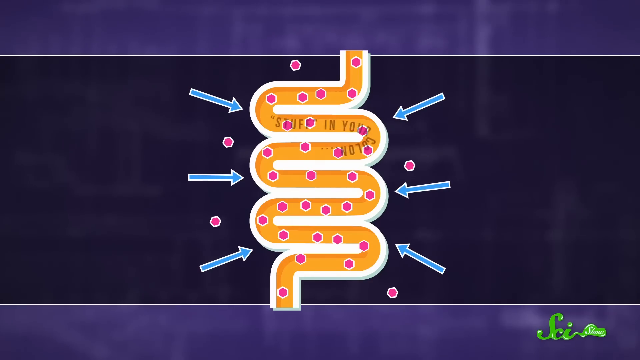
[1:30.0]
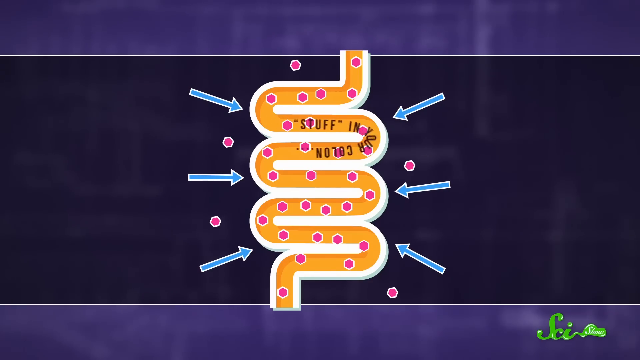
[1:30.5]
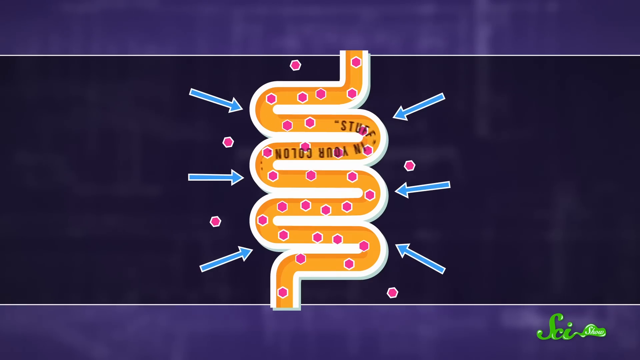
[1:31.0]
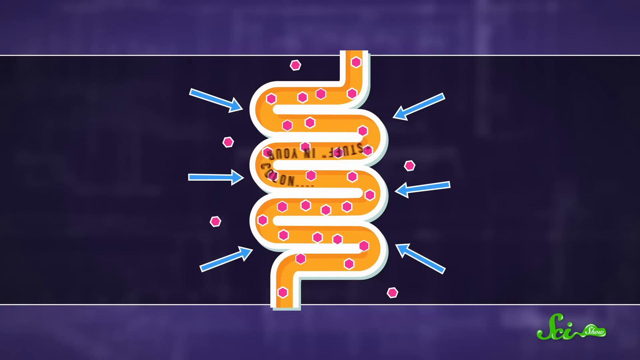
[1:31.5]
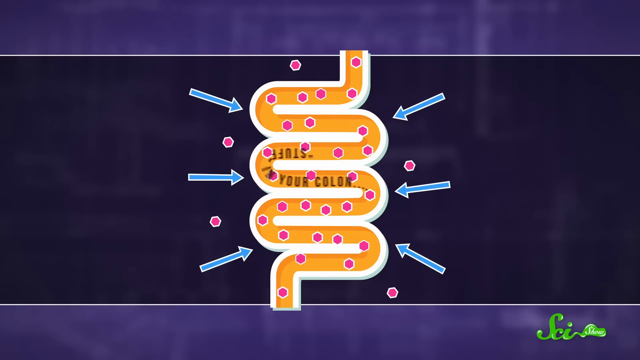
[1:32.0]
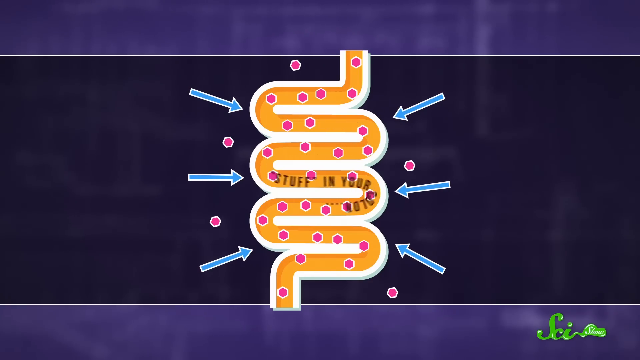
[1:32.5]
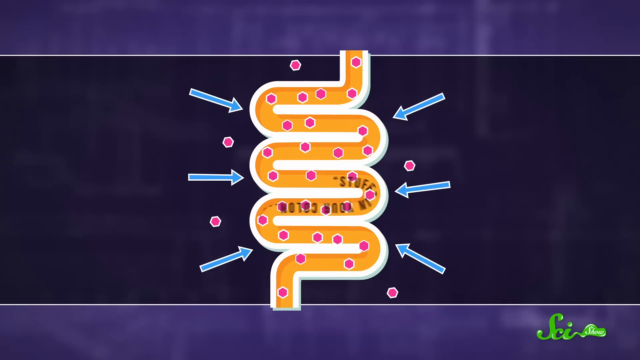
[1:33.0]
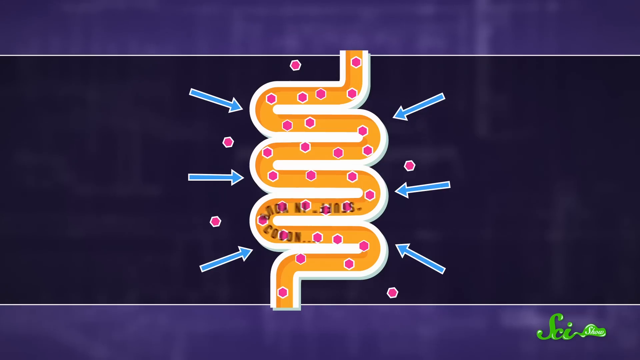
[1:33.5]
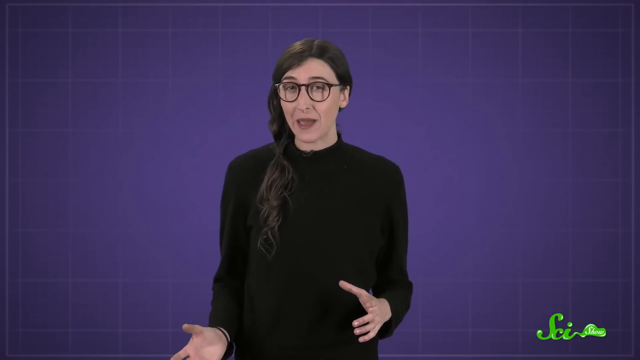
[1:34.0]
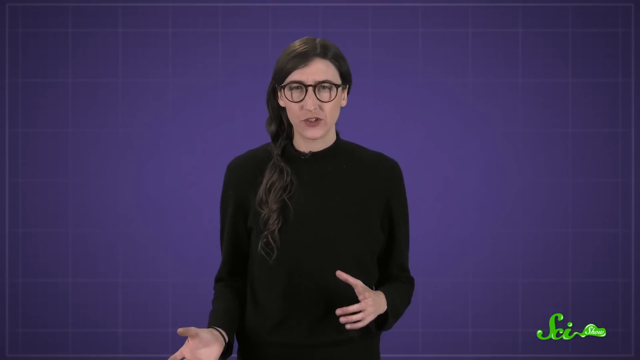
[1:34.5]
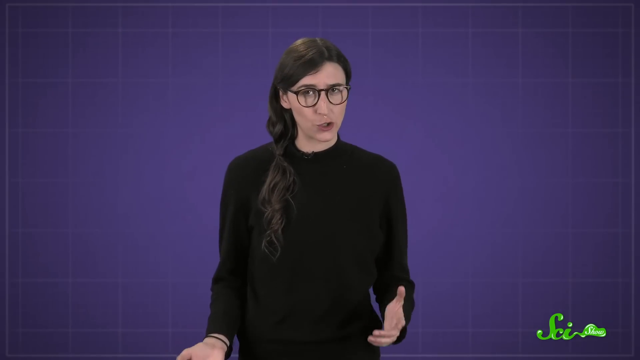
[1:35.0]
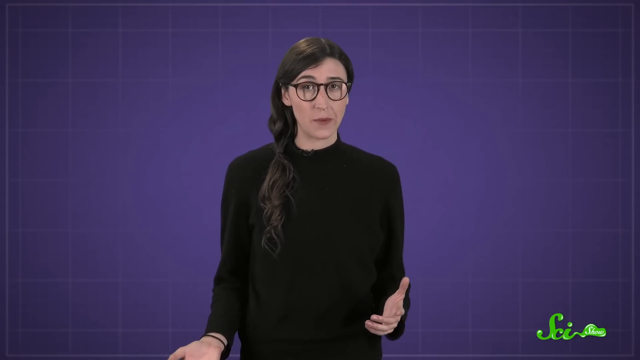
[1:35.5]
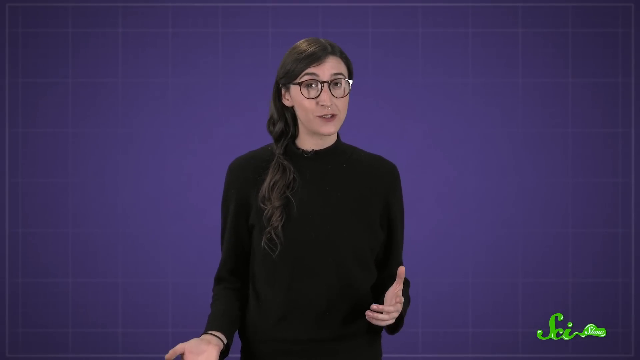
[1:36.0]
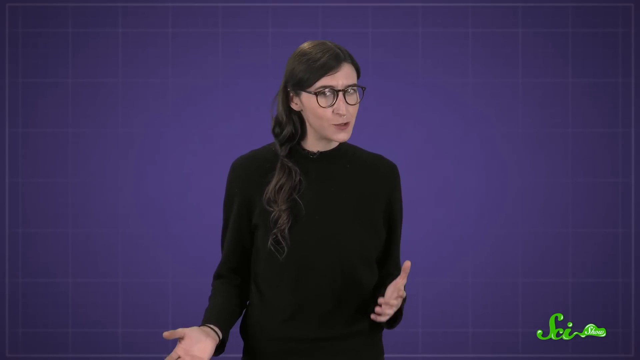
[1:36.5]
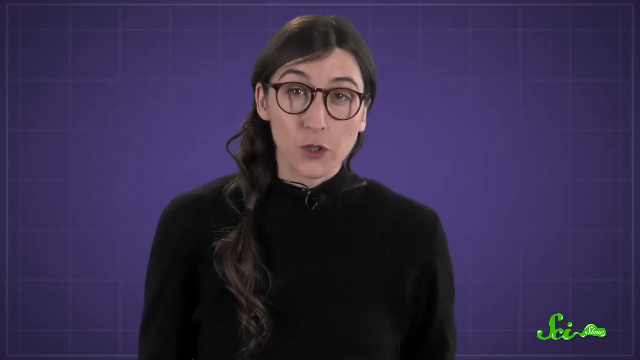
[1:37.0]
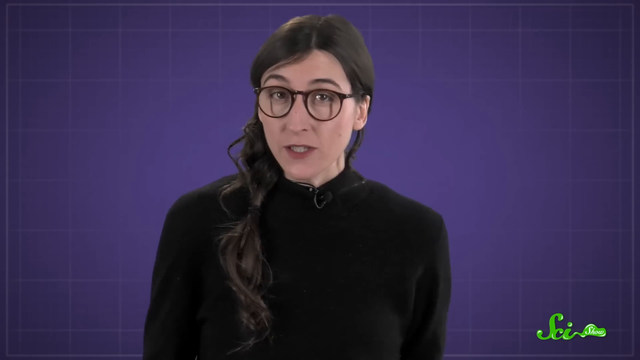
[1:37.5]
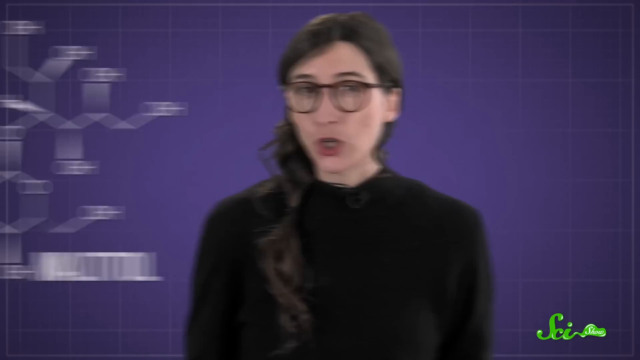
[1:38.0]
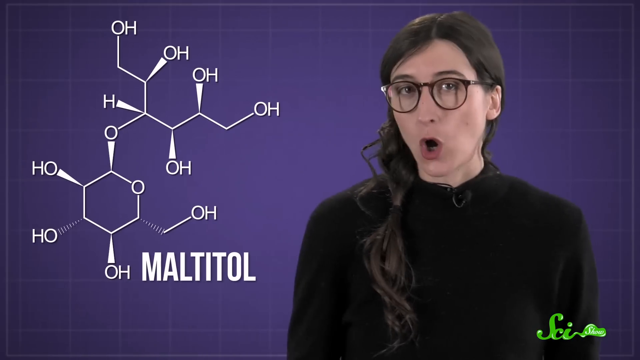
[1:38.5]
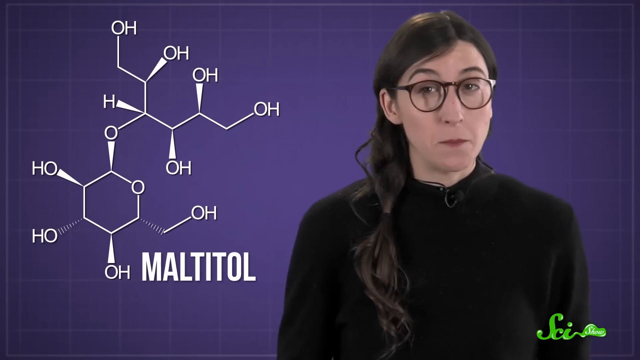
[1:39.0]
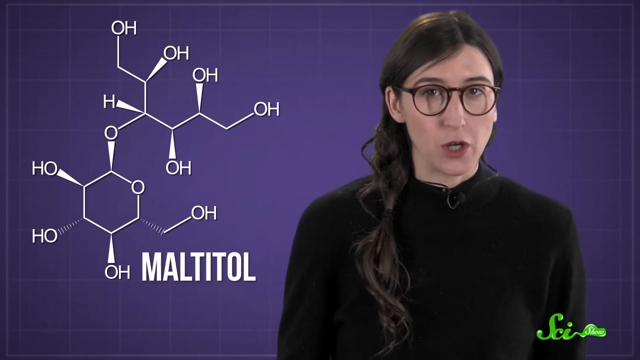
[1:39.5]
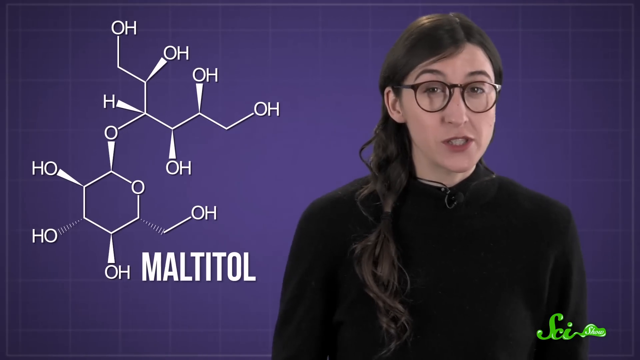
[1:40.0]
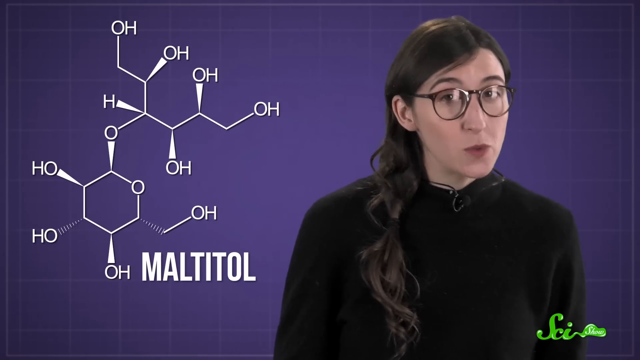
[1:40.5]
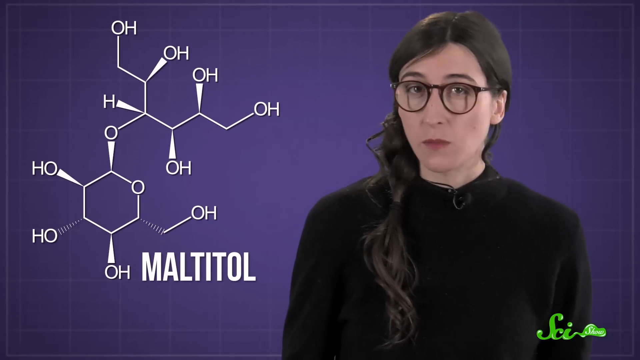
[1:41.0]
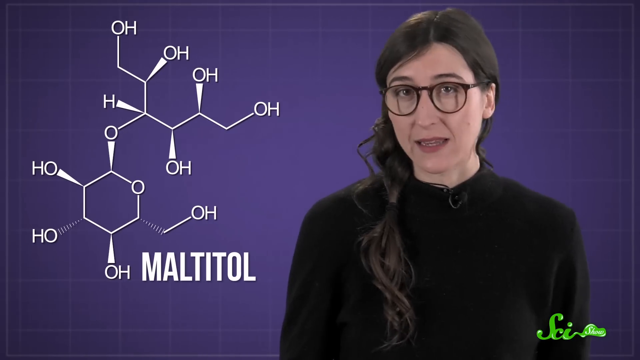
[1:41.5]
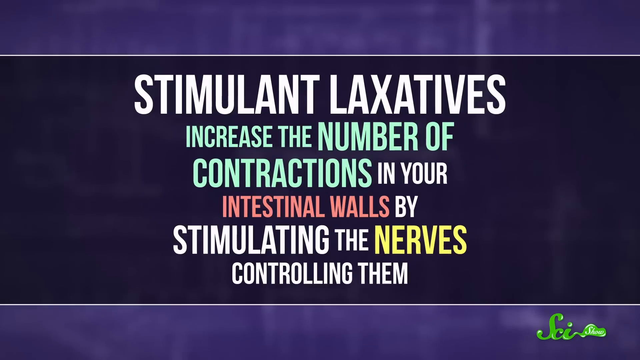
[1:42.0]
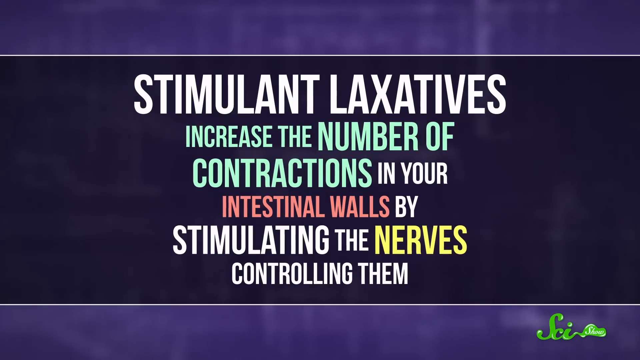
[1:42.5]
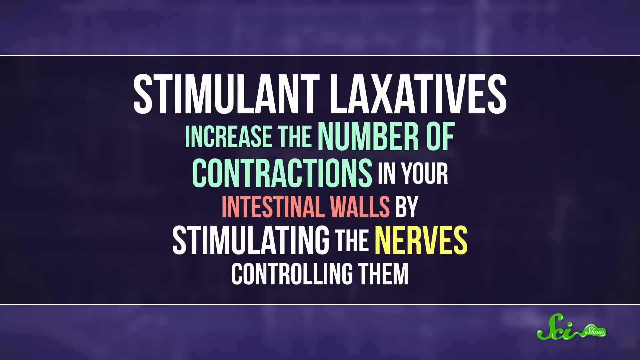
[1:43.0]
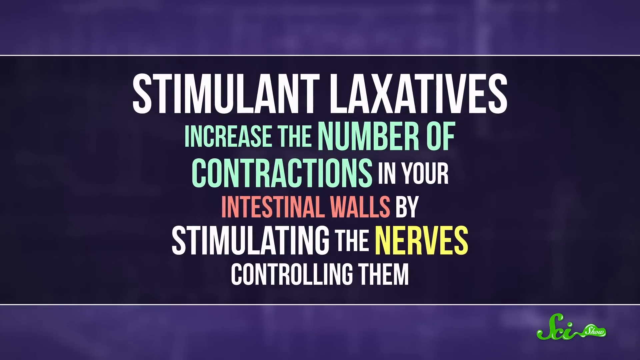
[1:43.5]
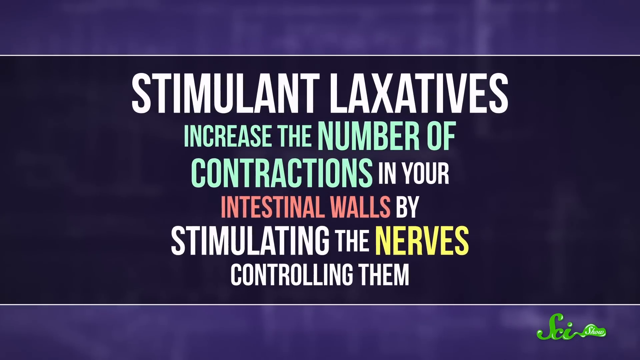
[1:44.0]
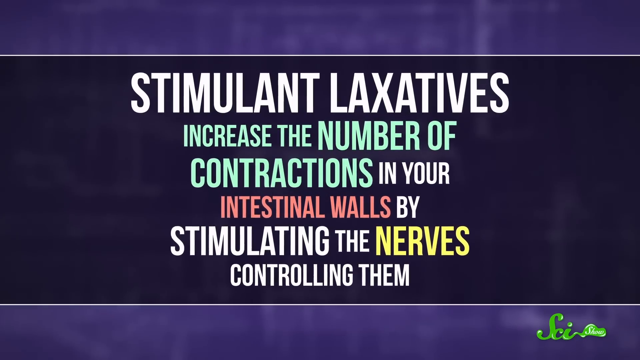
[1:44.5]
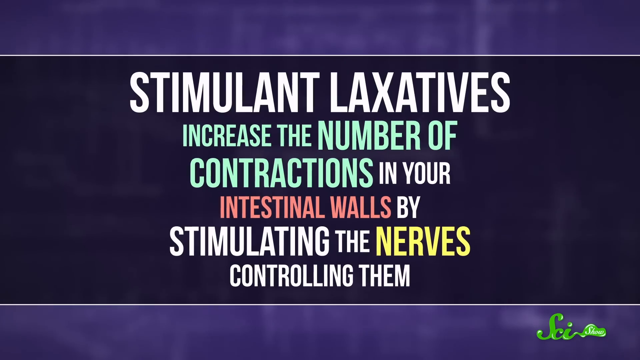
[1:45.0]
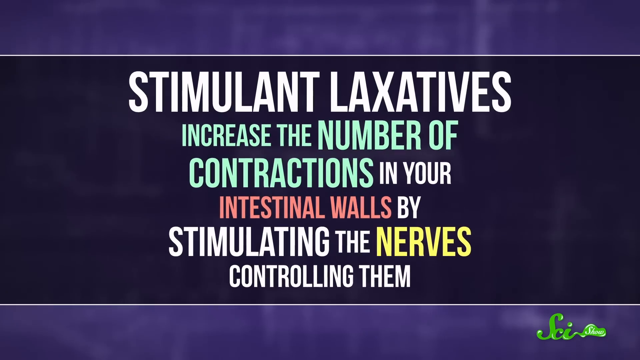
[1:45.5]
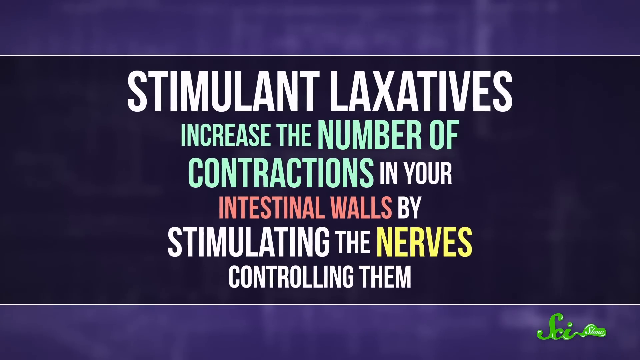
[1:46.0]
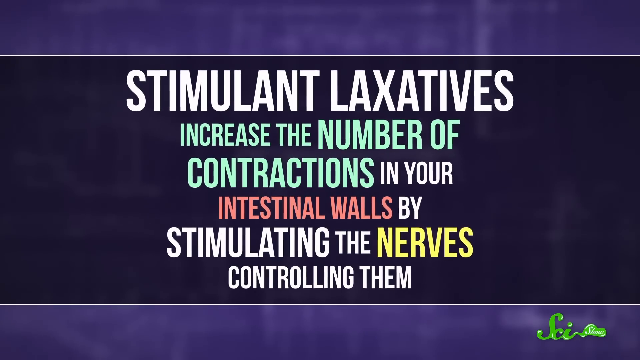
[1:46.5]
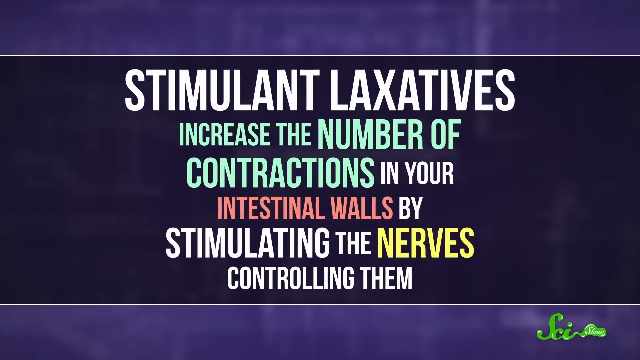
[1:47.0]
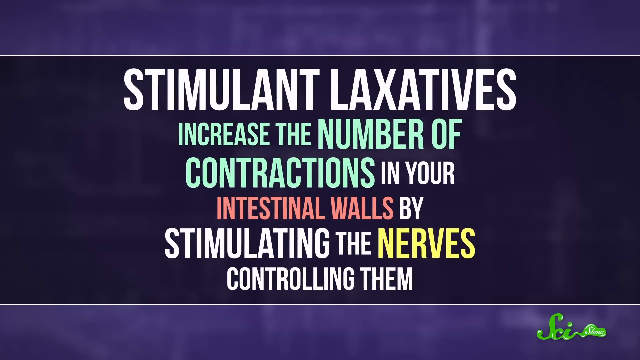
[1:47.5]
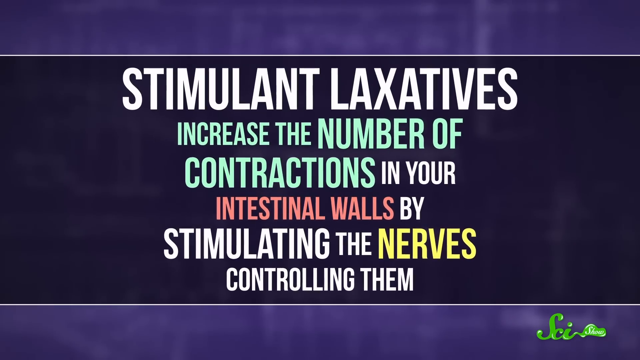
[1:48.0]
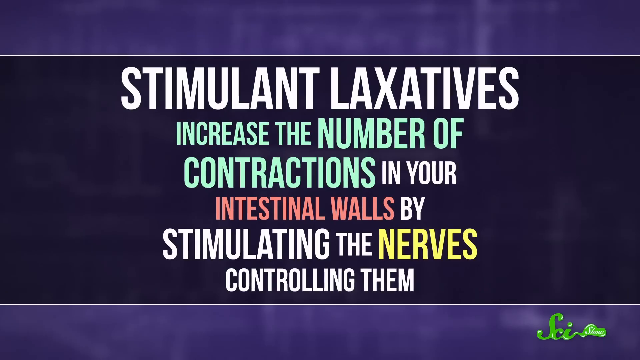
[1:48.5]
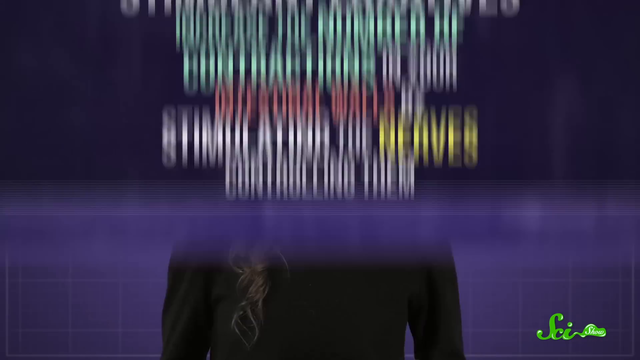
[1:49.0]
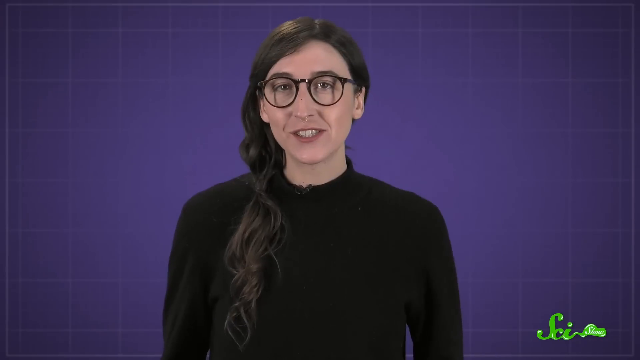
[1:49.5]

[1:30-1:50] An imaginary picture of intestines appears, with arrows pointing at it, and stuff can be seen going down it into the colon. The video then returns to the woman speaking. To her left is something almost like a scientific chart, with the text "Maltitol." Text reads "stimulant laxatives increase the number of contractions in your intestinal walls by stimulating the nerves controlling them." She is then shown speaking again.